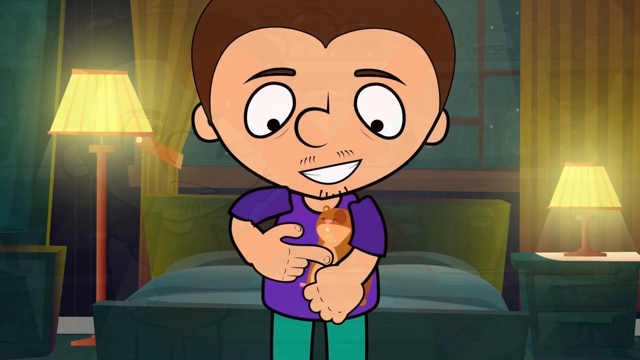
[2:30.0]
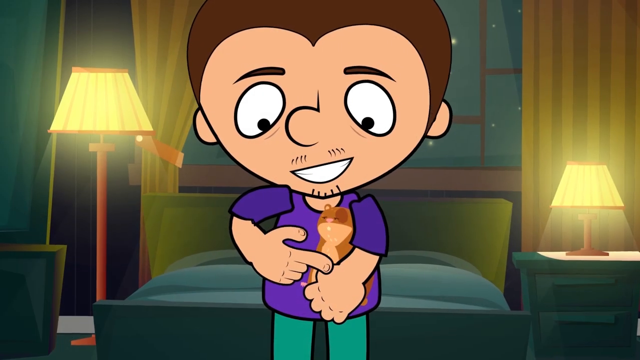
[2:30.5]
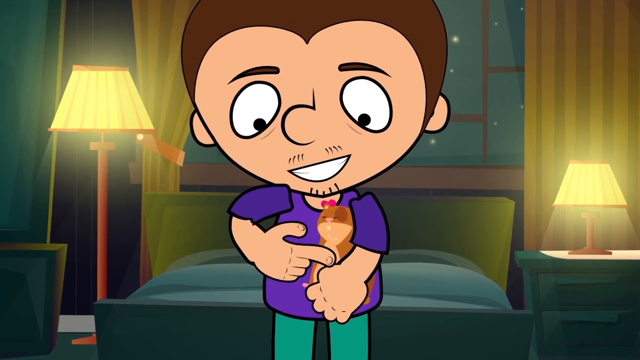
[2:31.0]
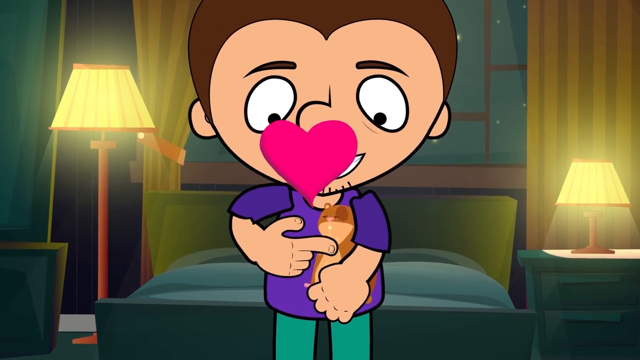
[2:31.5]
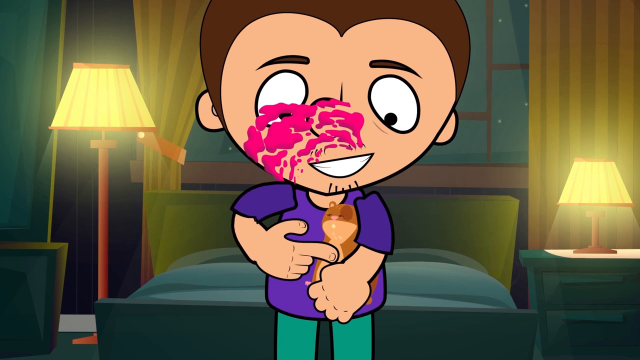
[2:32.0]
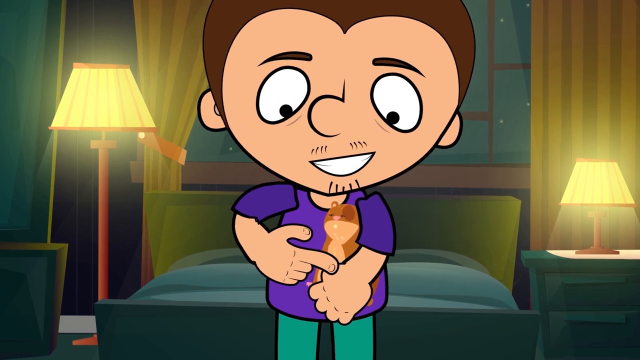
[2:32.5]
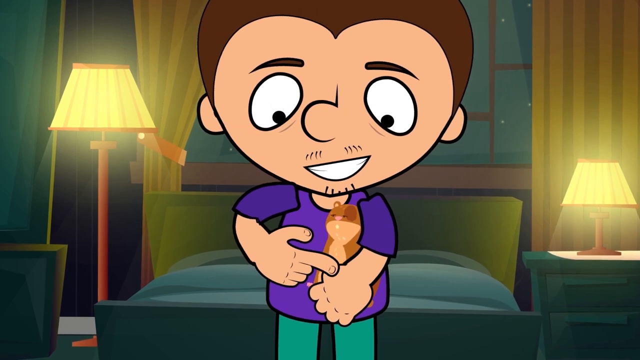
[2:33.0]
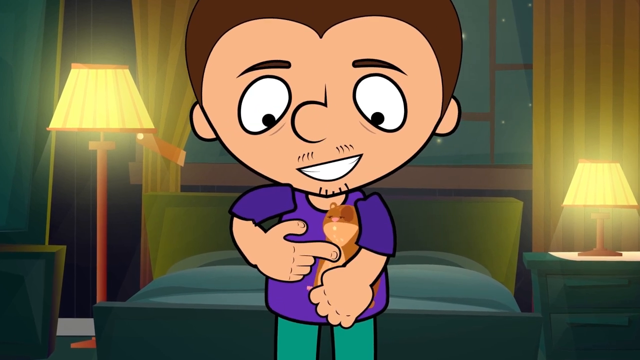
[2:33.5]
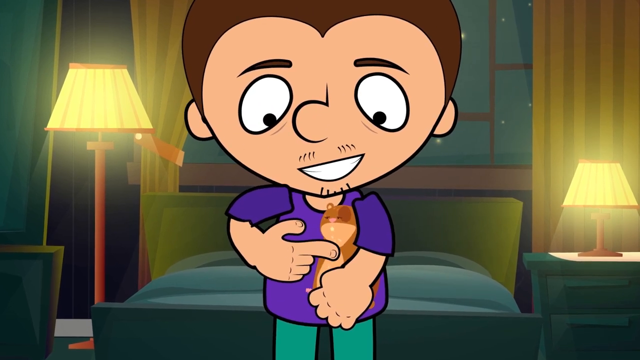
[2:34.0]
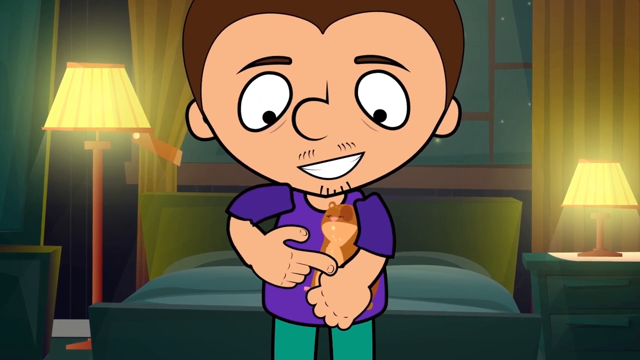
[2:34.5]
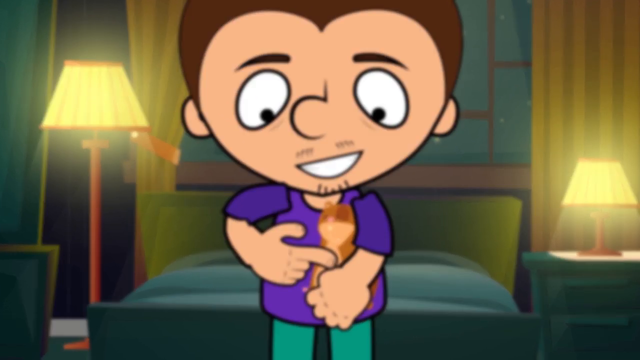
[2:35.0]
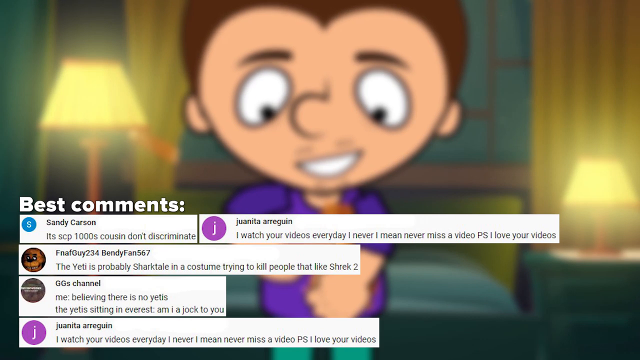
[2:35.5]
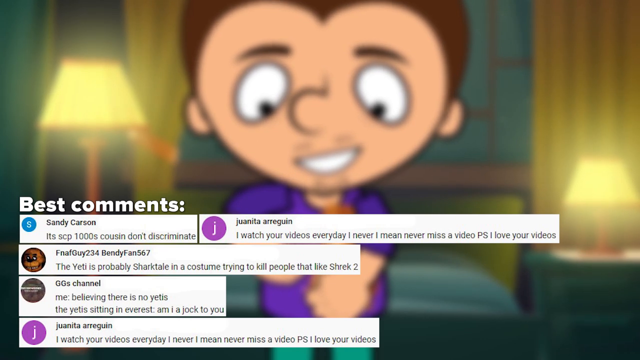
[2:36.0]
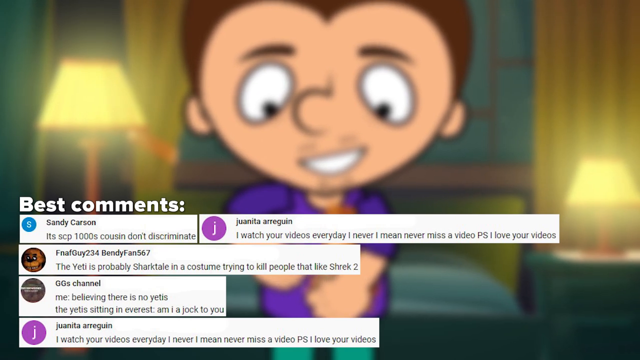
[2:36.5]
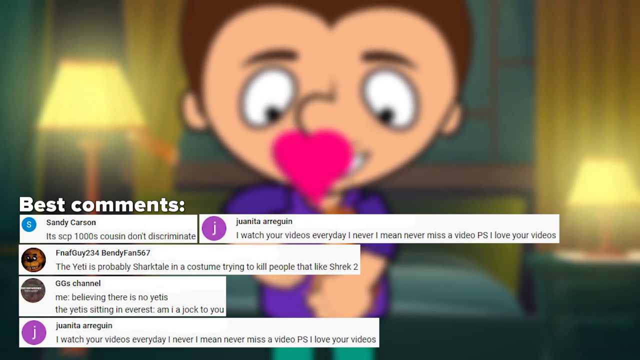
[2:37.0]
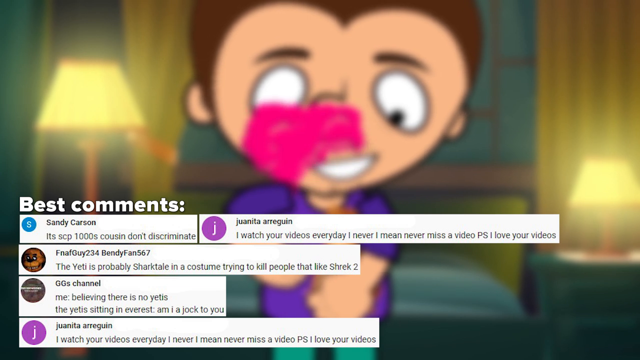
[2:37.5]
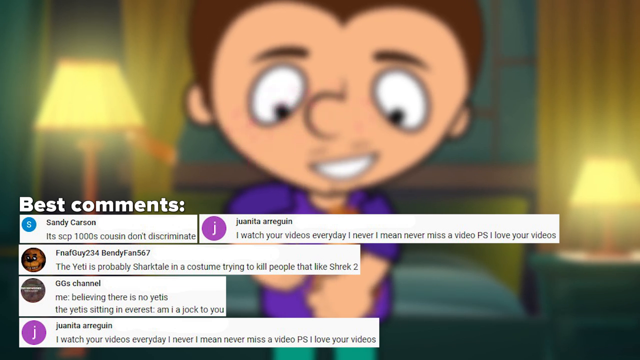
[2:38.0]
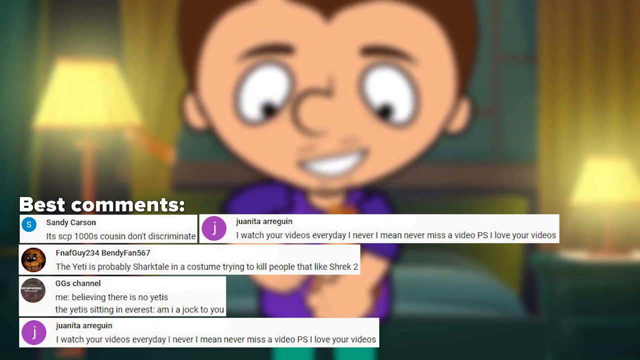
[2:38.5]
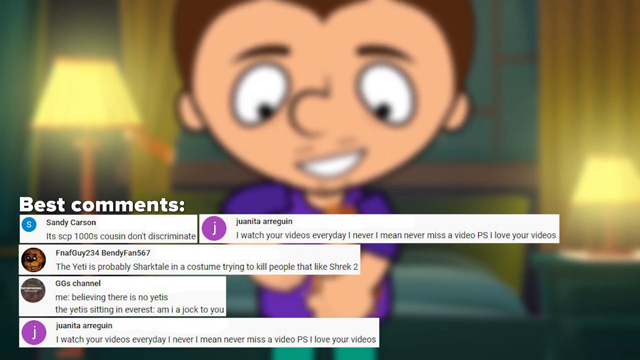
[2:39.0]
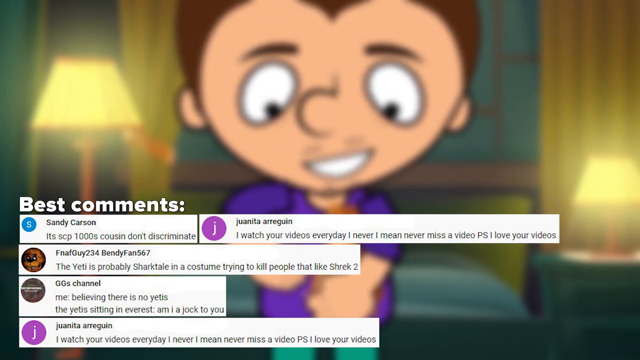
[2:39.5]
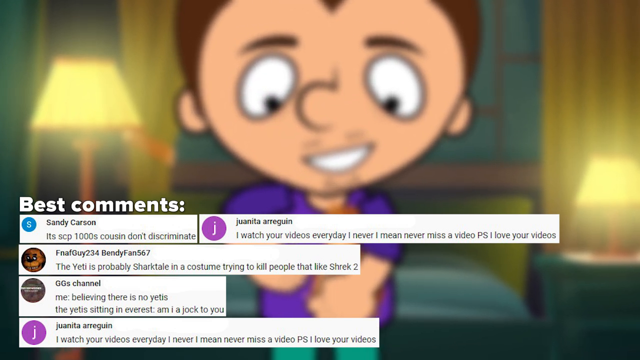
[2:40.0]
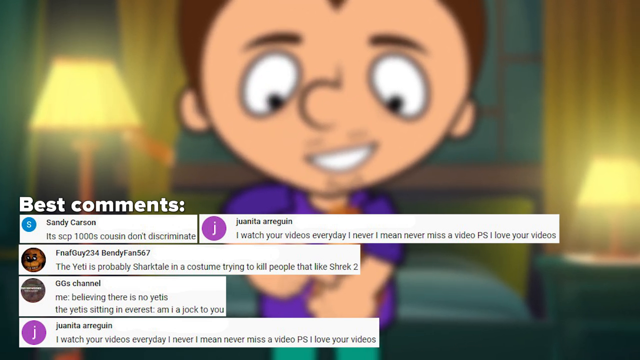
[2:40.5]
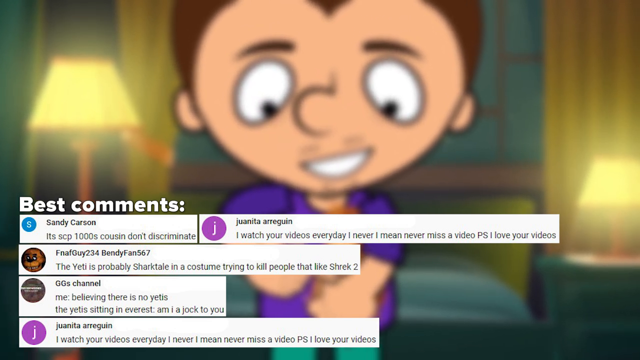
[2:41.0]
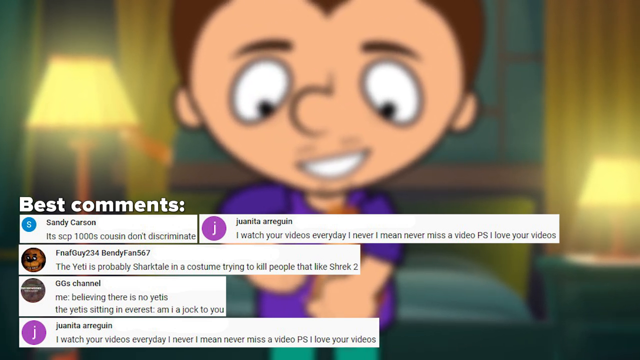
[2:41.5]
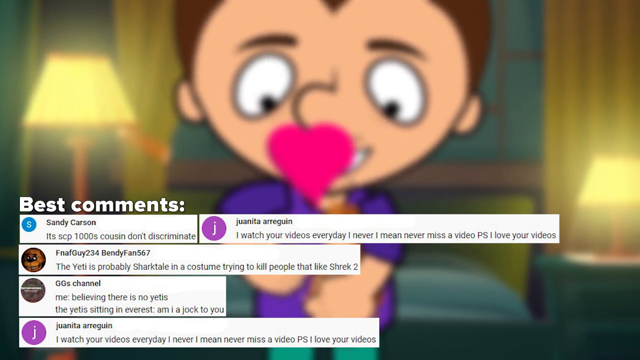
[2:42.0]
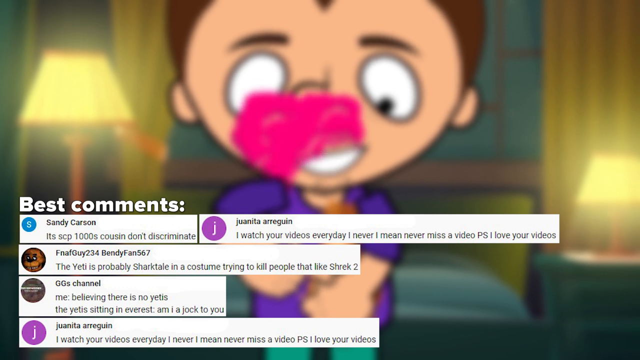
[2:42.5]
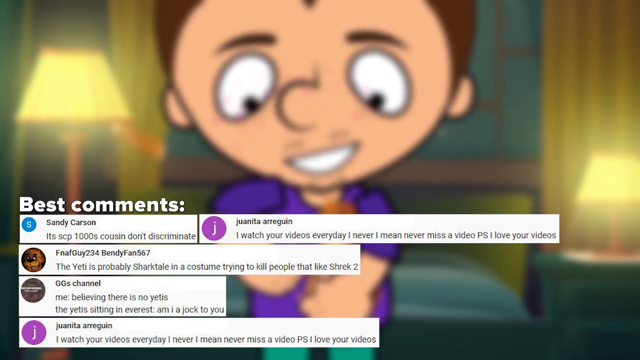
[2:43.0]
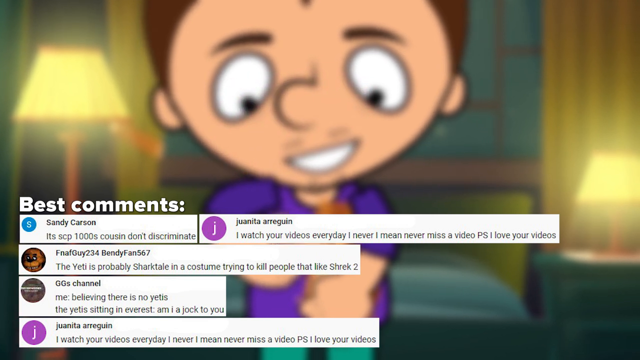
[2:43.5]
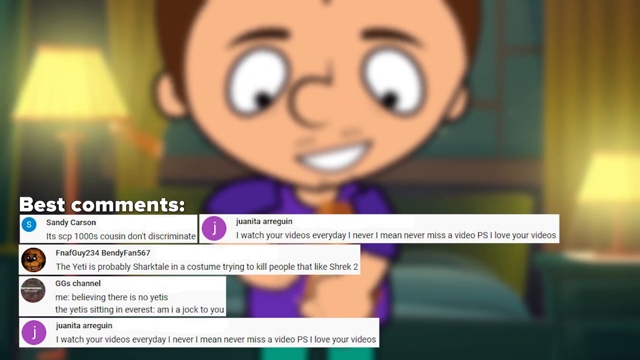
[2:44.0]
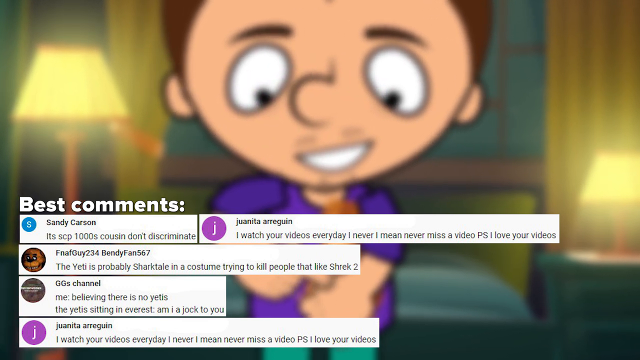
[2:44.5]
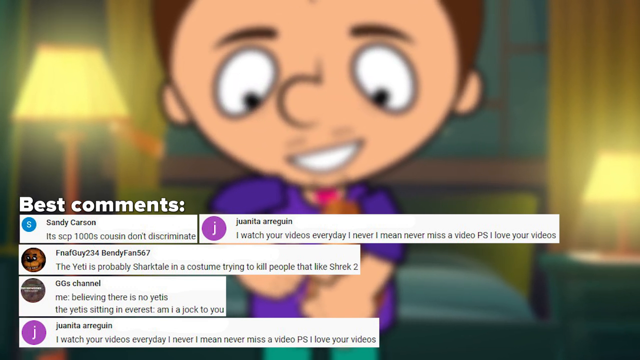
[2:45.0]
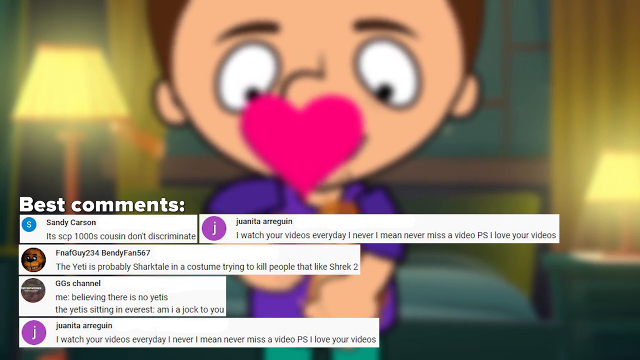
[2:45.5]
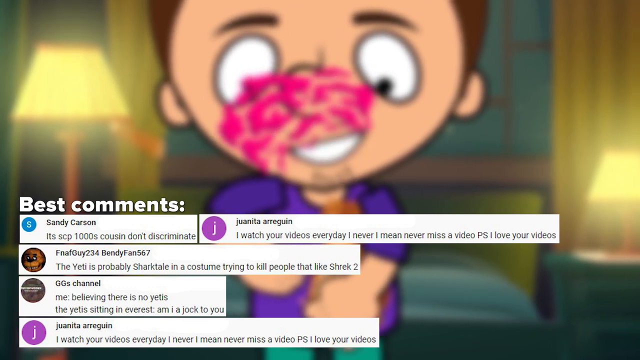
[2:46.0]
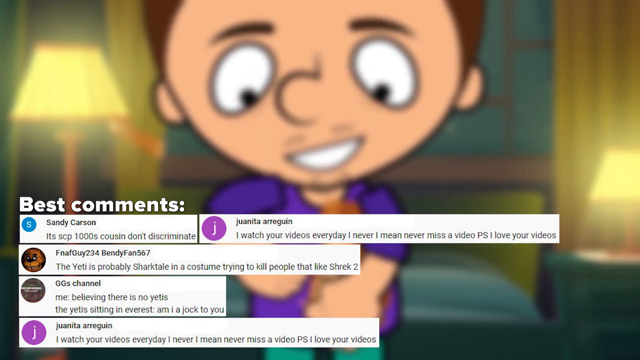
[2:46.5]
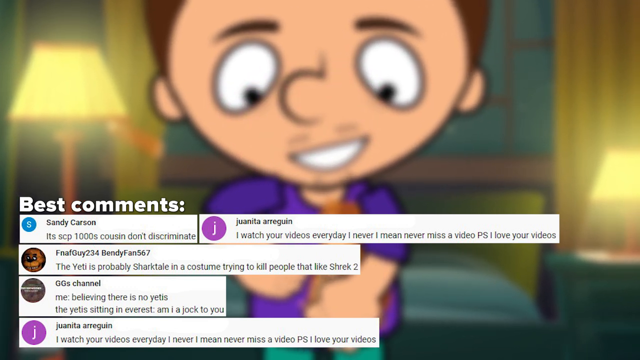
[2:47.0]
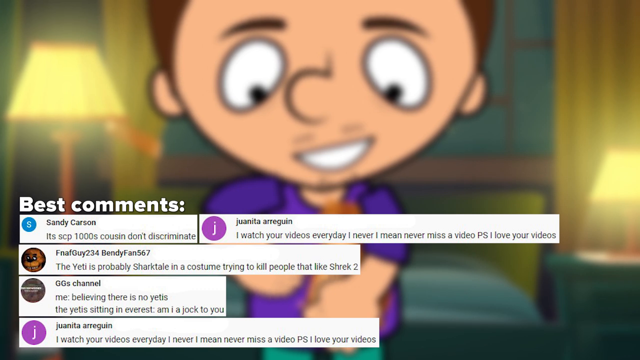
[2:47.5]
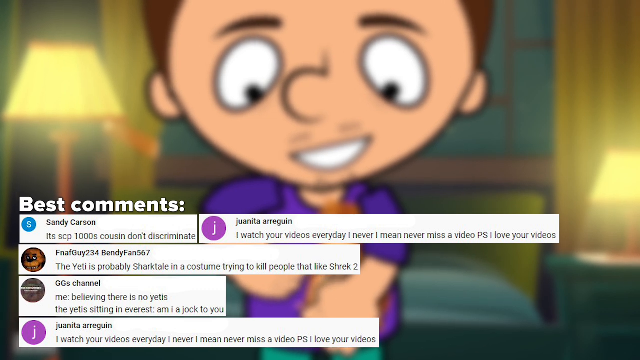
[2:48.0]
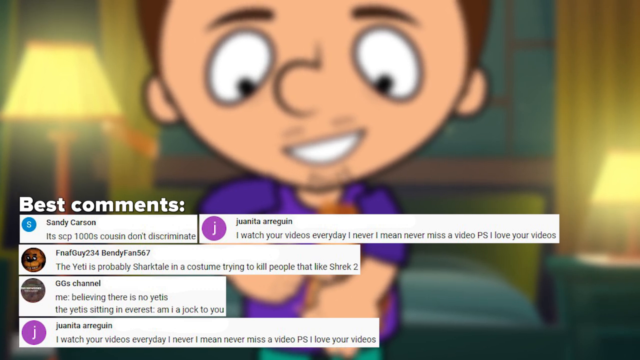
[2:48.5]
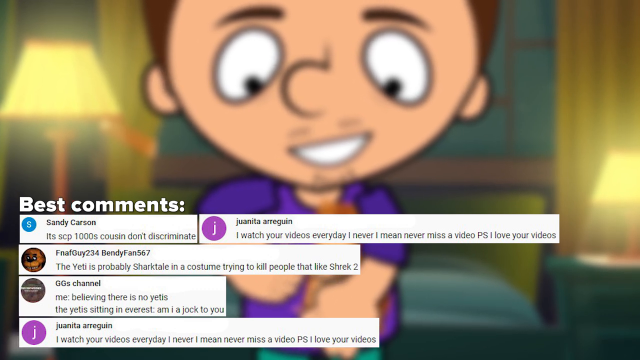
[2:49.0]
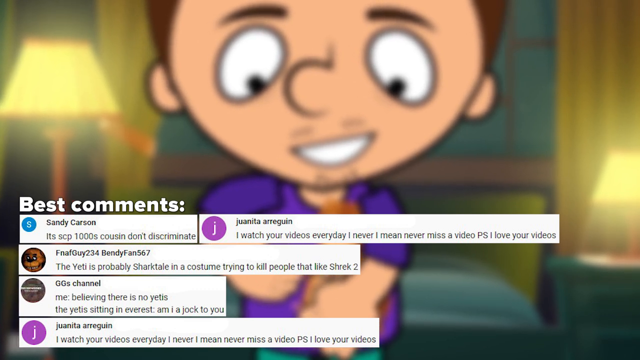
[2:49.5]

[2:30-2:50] The male character holds the hamster and gently rubs it near its neck and chest with his right index finger in a loving, approving way. The hamster appears happy, and the man also appears happy, smiling as he looks down at it. A pink love heart emanates from the hamster, bursts into smaller particles and disappears. The man keeps rubbing the hamster. Five comments then appear on the screen, highlighted as the best comments; they don't seem related to the events between the man and the hamster. Two are from the same person and are addressed to the maker of this cartoon series, showing appreciation.